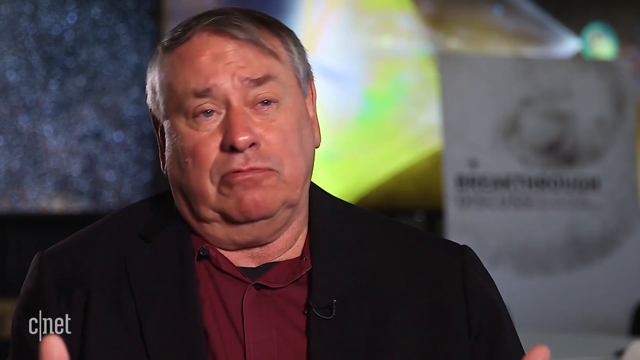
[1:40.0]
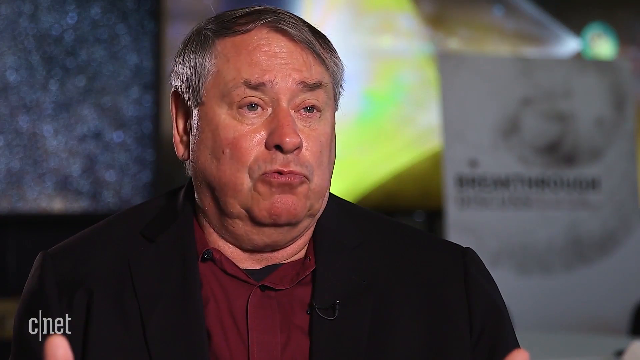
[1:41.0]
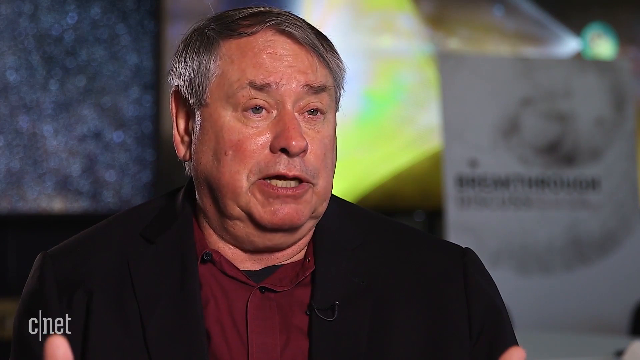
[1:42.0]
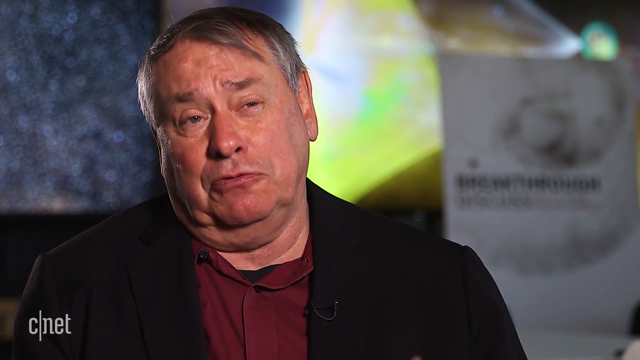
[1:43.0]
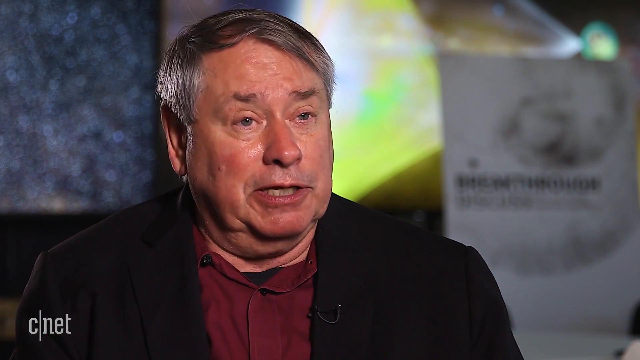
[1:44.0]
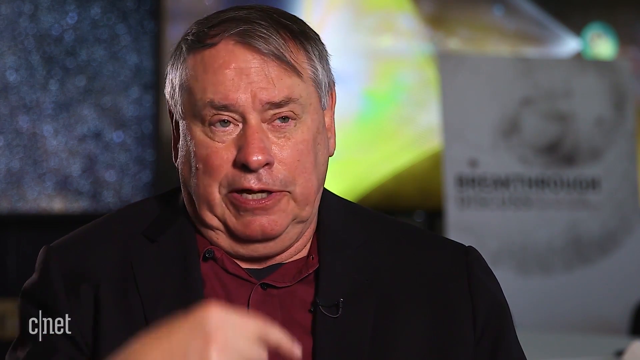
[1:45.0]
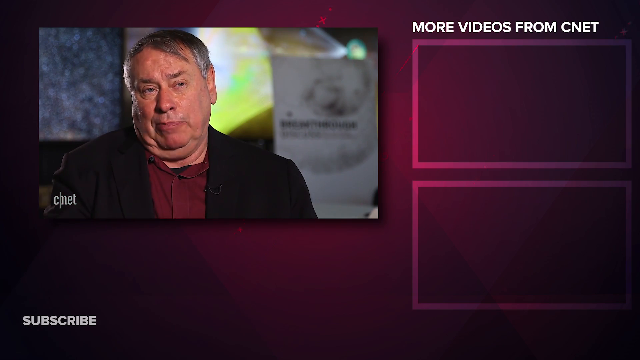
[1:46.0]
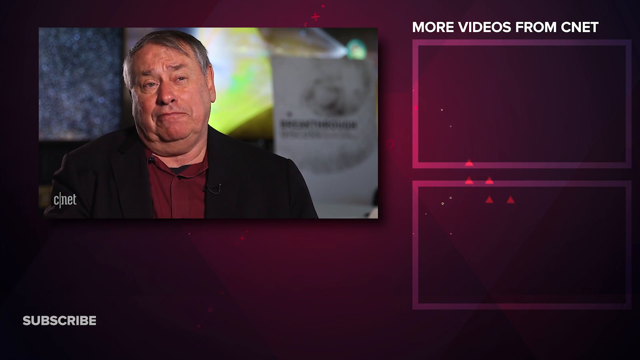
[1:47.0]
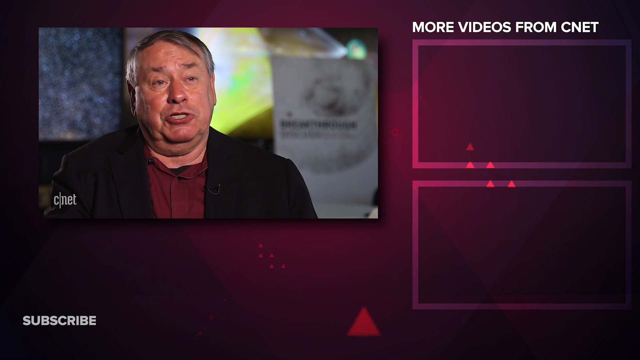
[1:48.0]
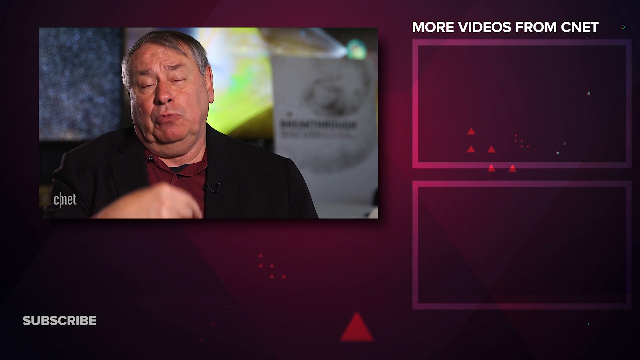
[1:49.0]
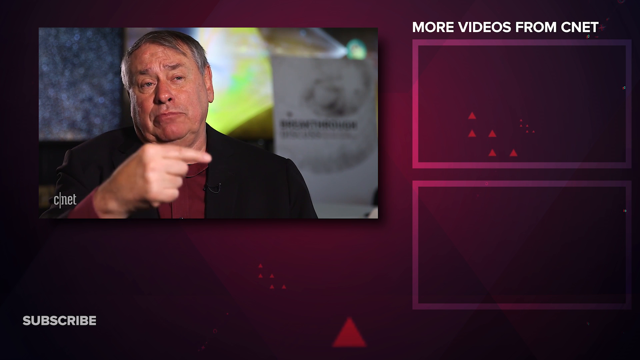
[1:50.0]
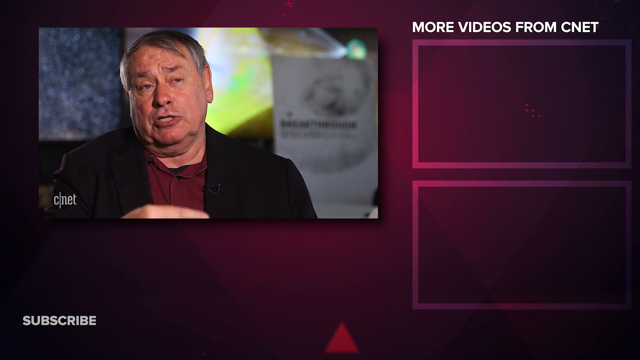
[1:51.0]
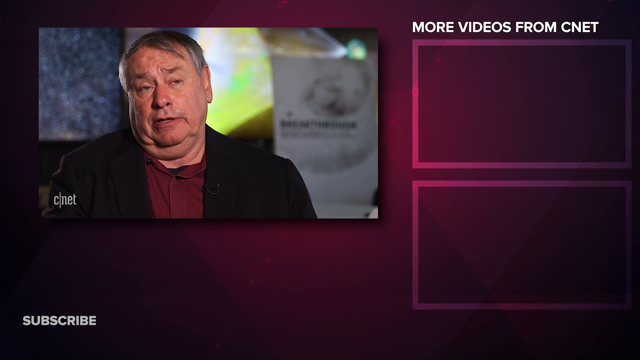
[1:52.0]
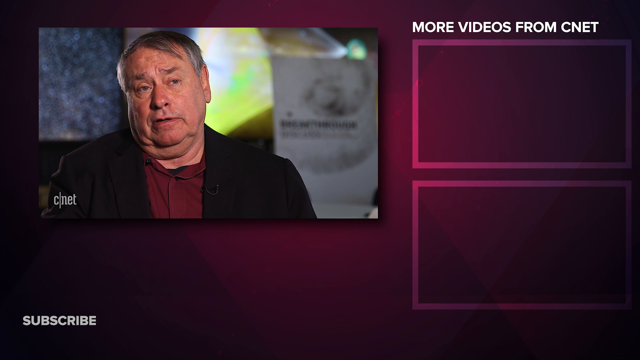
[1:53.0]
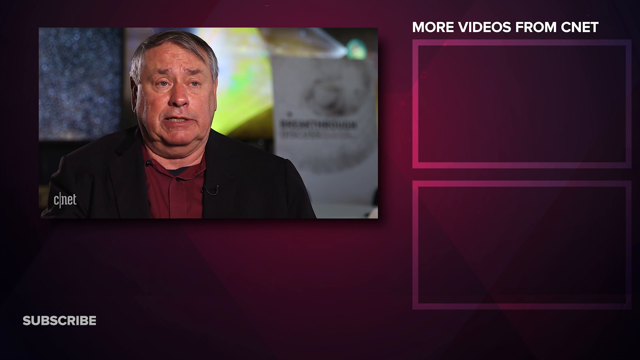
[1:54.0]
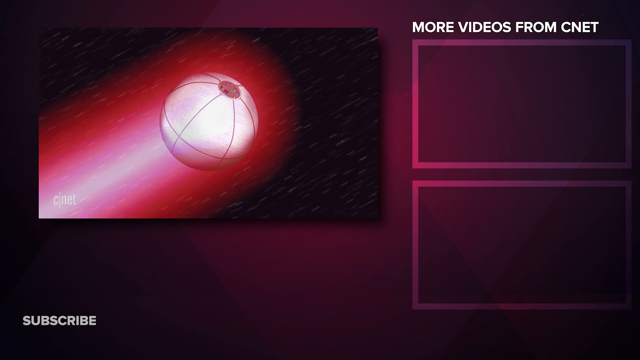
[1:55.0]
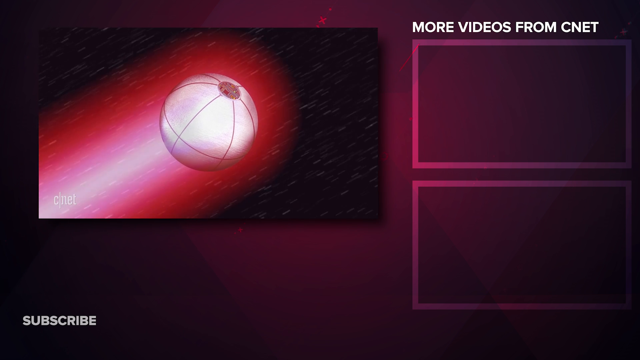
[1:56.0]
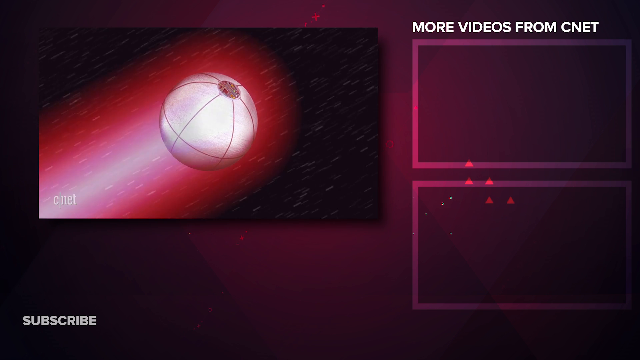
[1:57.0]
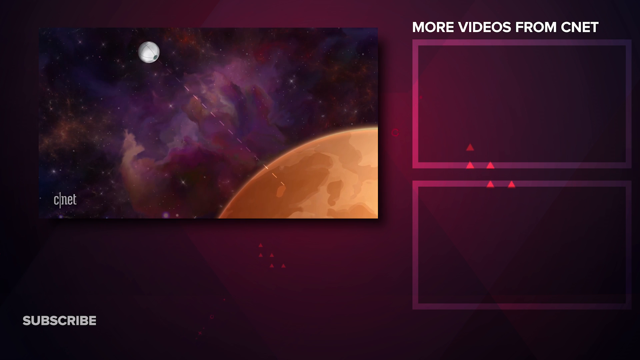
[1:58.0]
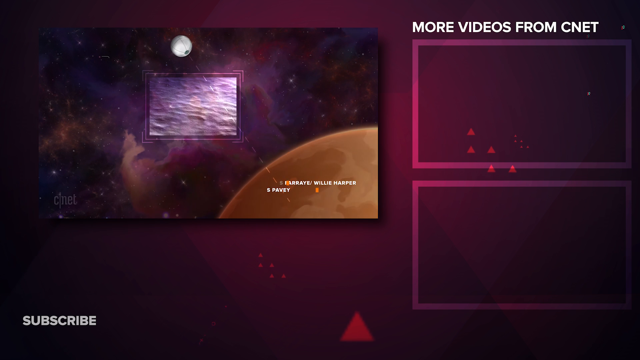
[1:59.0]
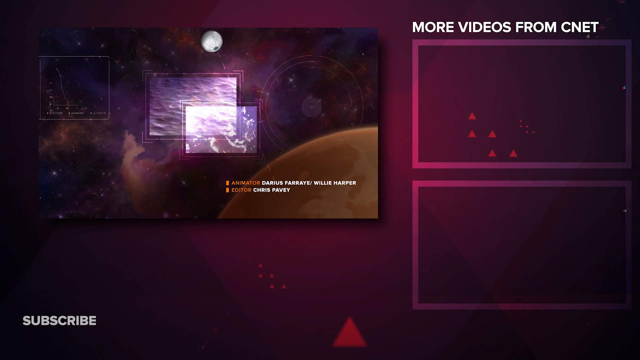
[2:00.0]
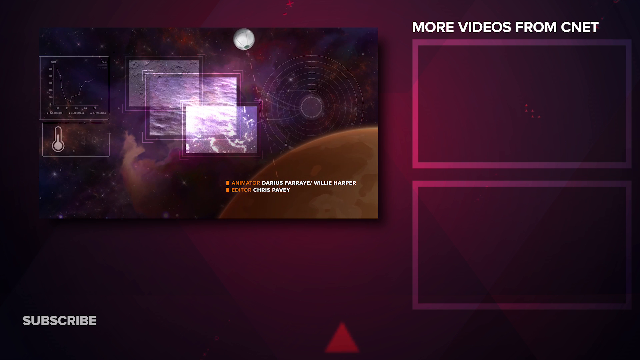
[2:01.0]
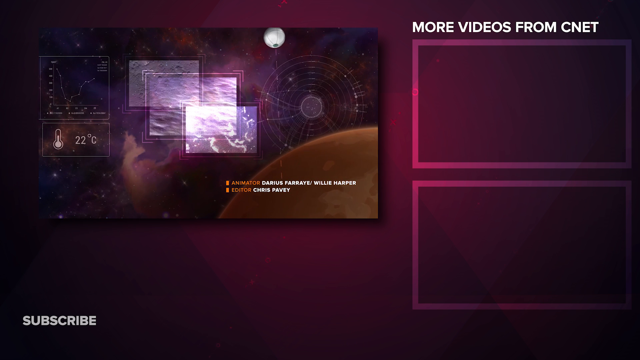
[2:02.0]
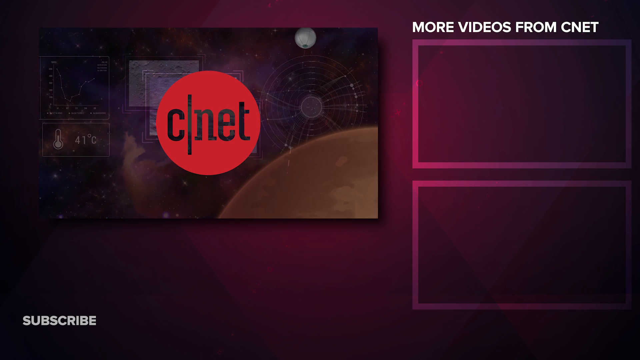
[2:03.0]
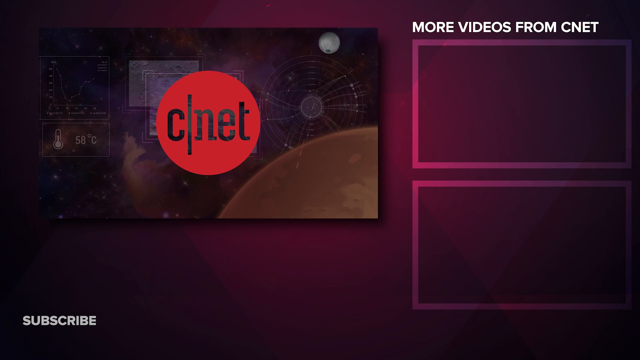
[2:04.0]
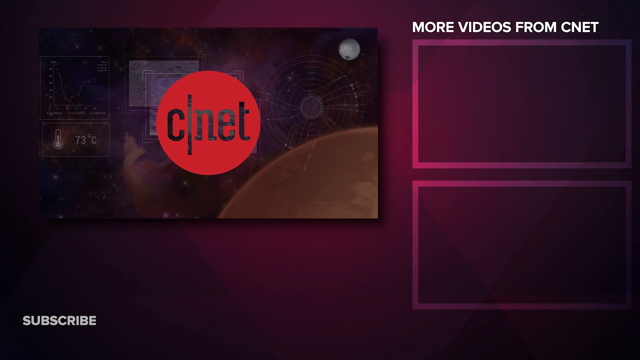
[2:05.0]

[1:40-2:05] The video cuts back to more footage of Pete, who is talking, probably about the machine that is the main subject of the video. He has straight, kind of flat-looking black hair and wears a black vest over a red undershirt. He looks a bit tired, with slightly droopy eyes. Next, the ball continues to orbit as more previously seen animations play. Finally, an end screen shows two windows, one at the top right and one at the bottom right, which are spaces for recommended videos. Right above this section, text reads "more videos from CNET."